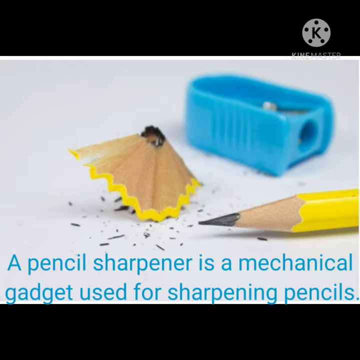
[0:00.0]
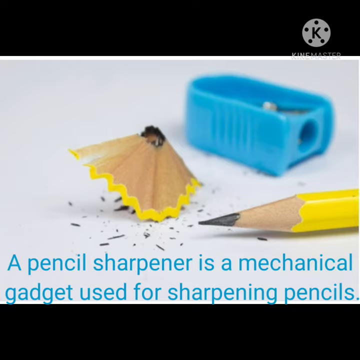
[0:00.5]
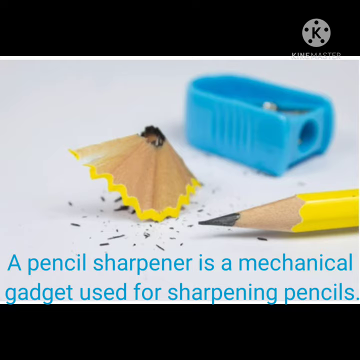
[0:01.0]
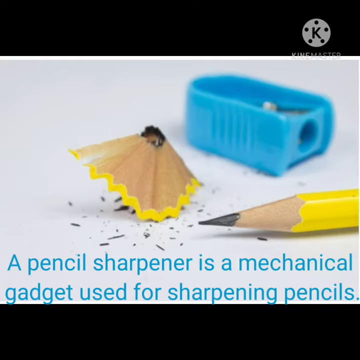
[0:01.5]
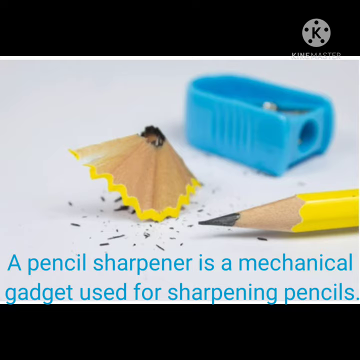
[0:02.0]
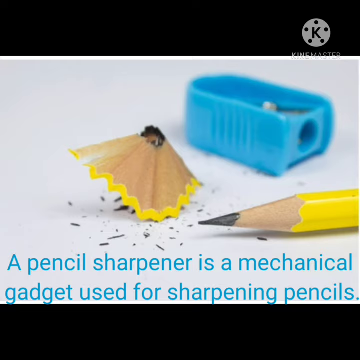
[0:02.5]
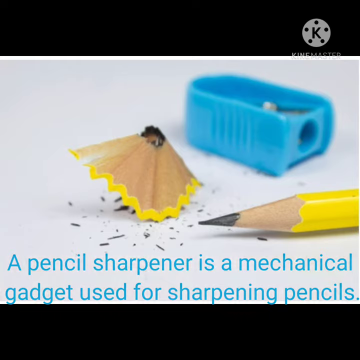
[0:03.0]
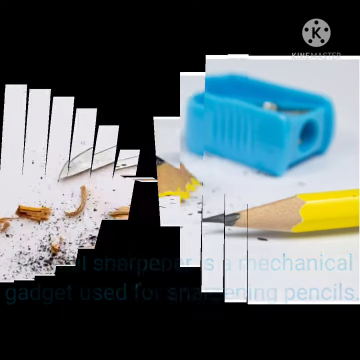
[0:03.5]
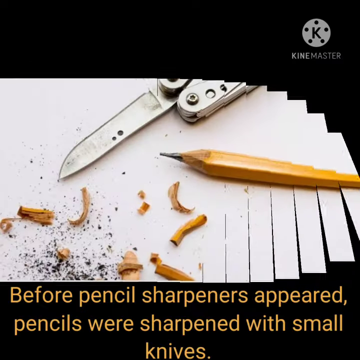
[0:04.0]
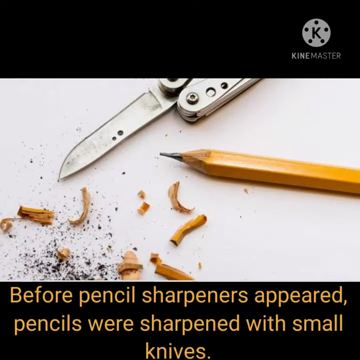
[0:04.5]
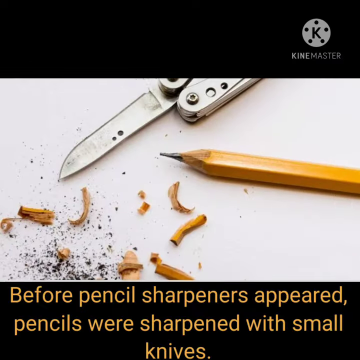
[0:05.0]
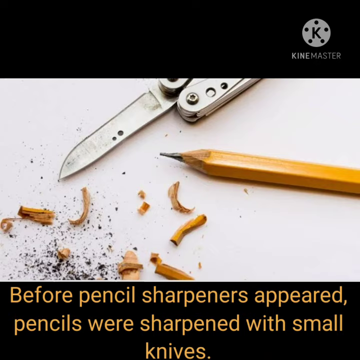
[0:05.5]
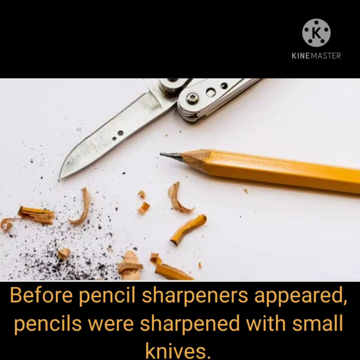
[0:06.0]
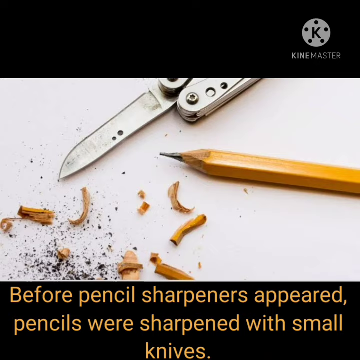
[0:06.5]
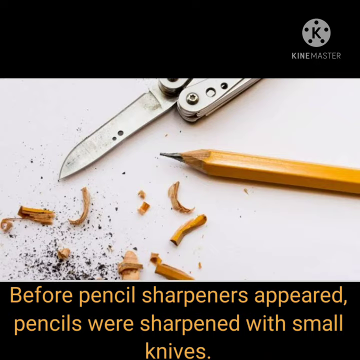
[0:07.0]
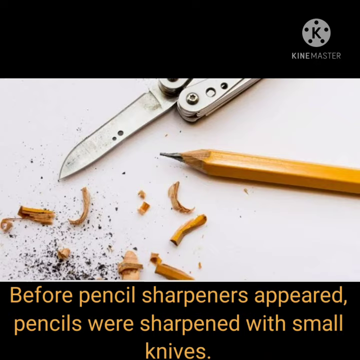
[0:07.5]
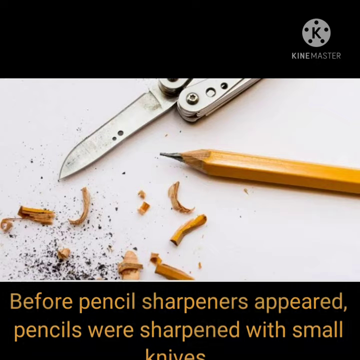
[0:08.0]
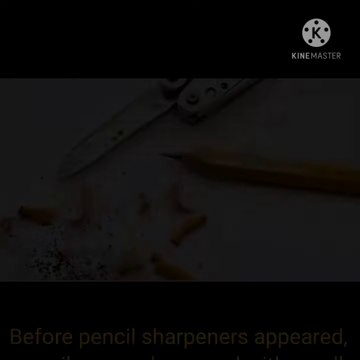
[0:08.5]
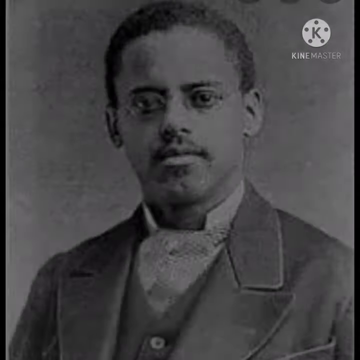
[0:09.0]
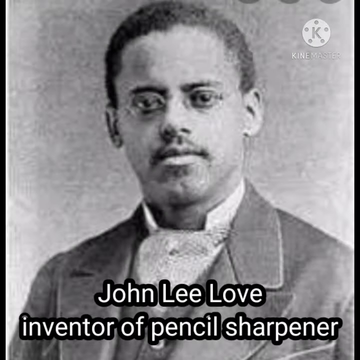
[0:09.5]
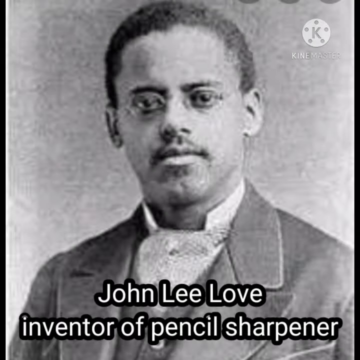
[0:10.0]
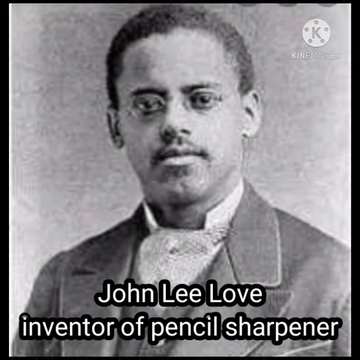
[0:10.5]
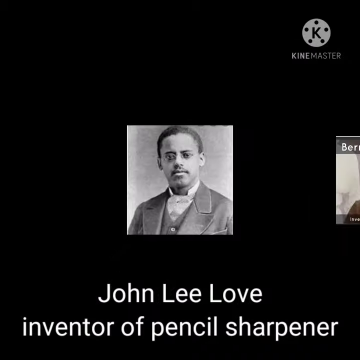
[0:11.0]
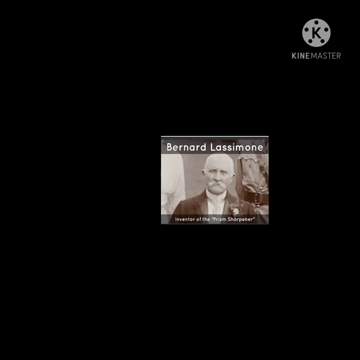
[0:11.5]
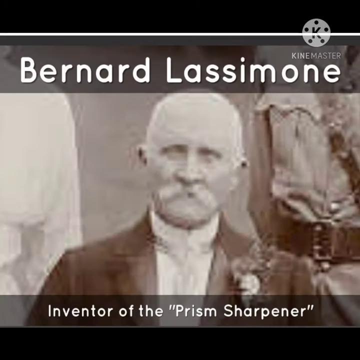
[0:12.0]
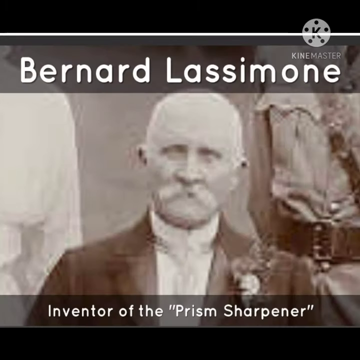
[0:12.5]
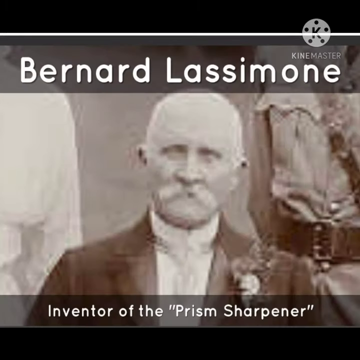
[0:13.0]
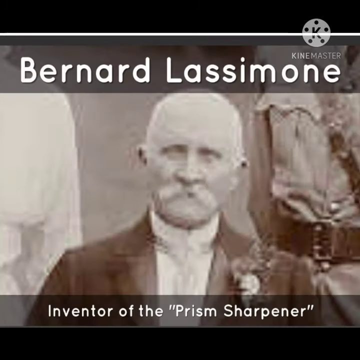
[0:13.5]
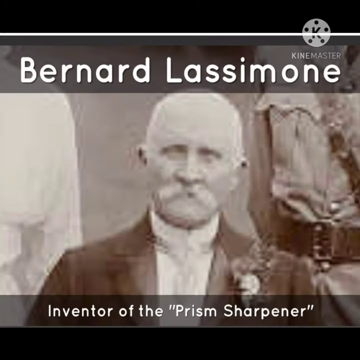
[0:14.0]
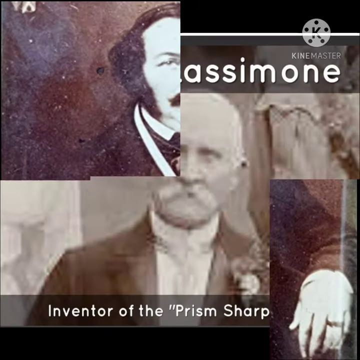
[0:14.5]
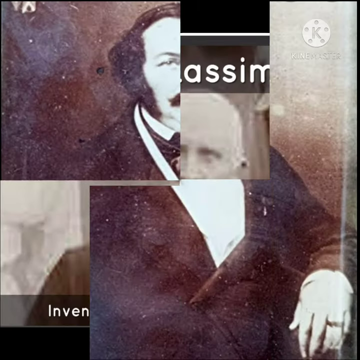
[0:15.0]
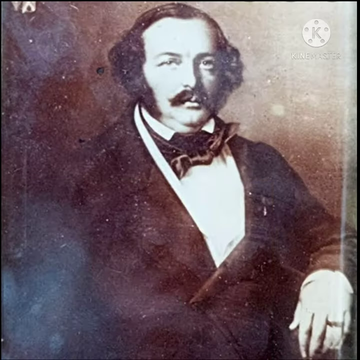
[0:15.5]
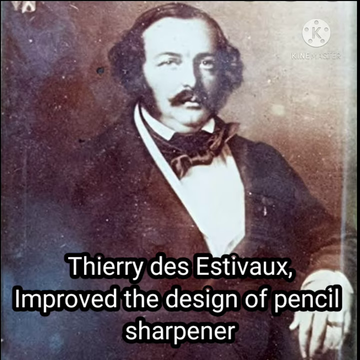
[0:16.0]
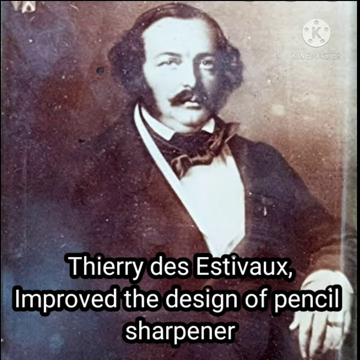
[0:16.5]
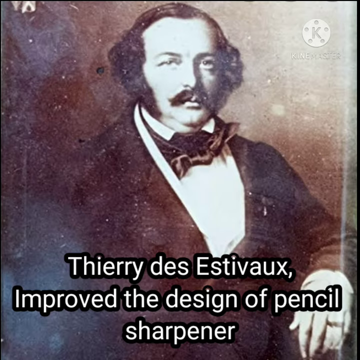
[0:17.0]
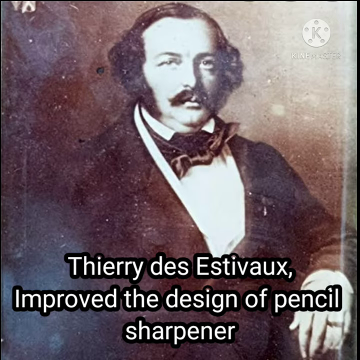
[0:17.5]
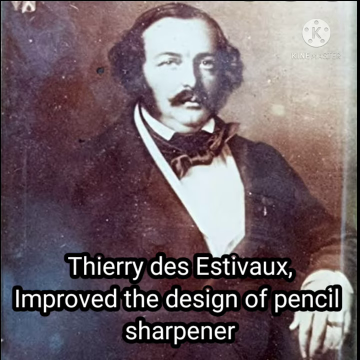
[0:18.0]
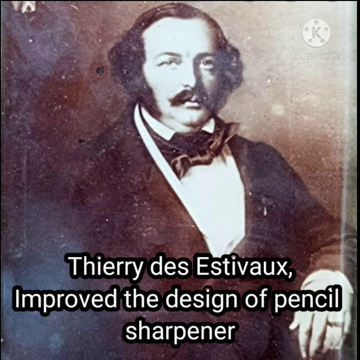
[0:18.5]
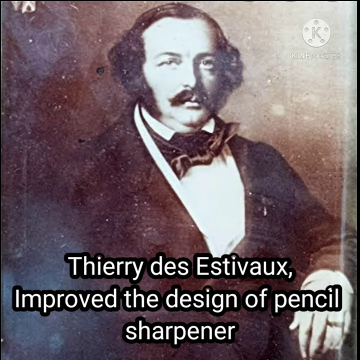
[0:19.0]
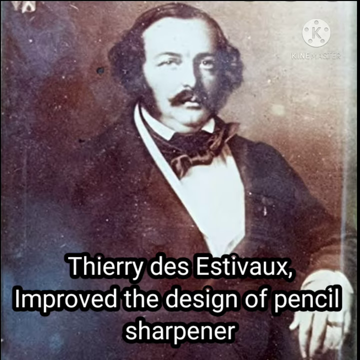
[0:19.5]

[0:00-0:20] The video is zoomed in on a yellow pencil and a couple of different devices: a shiny silver knife and a blue pencil sharpener. It then switches to a series of black and white photos of various men, some with big beards and some with mustaches. The photos look like they are from a different century, apparently the 19th century.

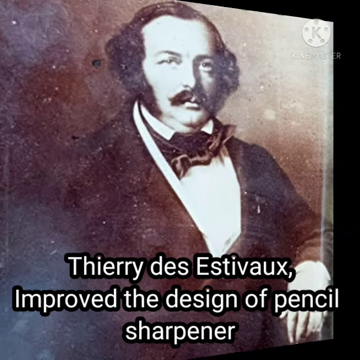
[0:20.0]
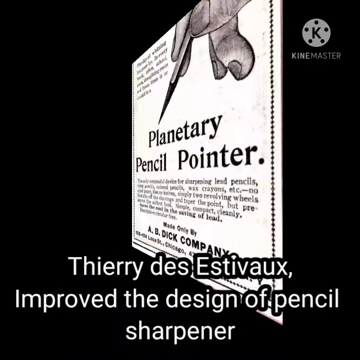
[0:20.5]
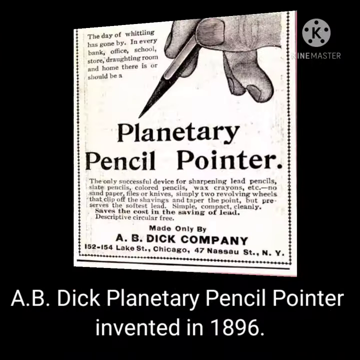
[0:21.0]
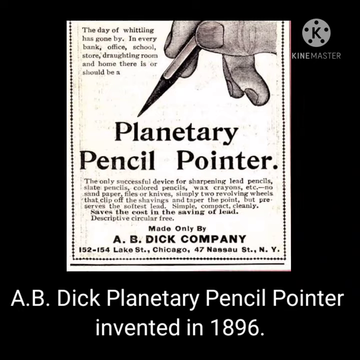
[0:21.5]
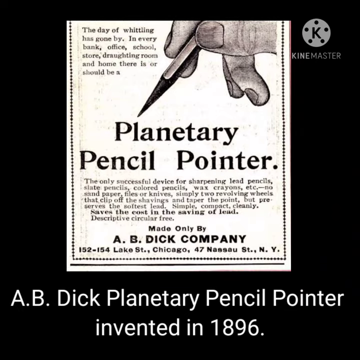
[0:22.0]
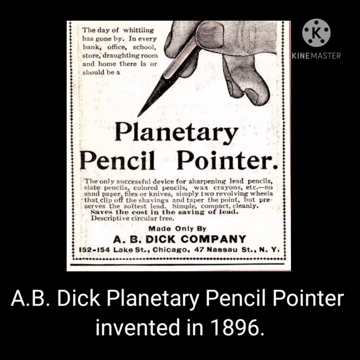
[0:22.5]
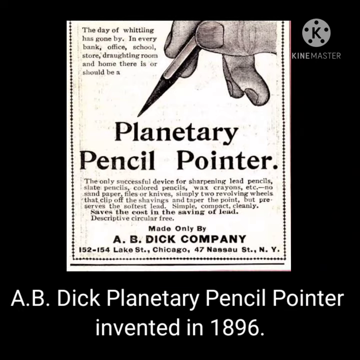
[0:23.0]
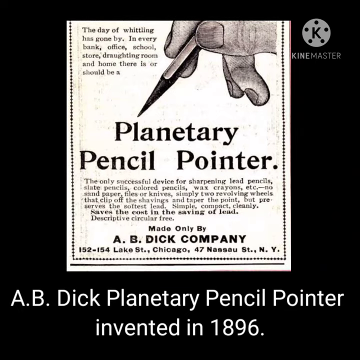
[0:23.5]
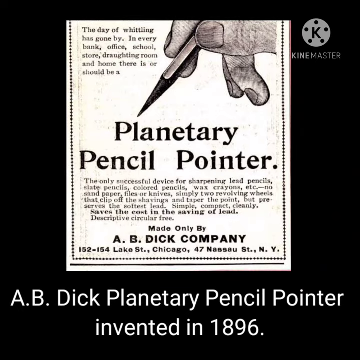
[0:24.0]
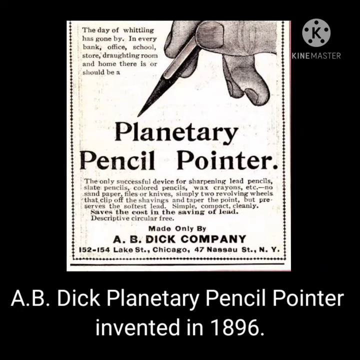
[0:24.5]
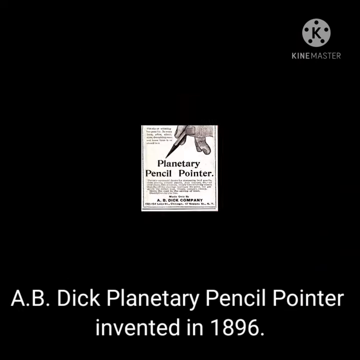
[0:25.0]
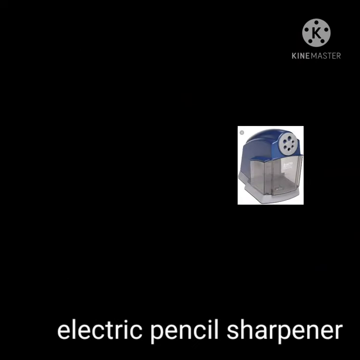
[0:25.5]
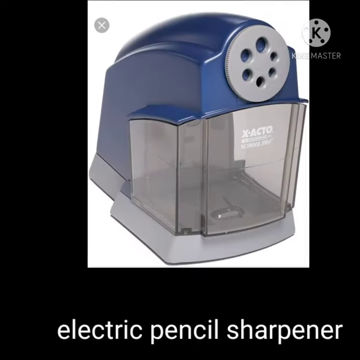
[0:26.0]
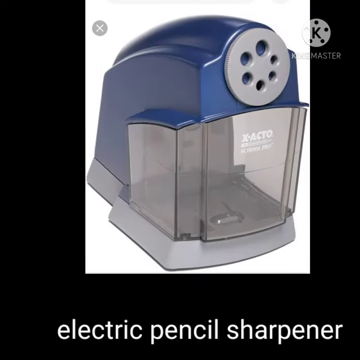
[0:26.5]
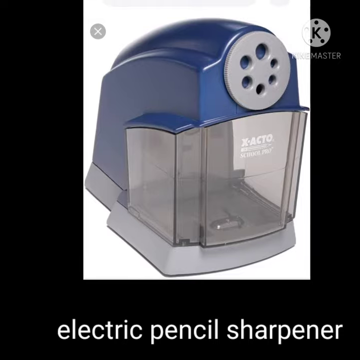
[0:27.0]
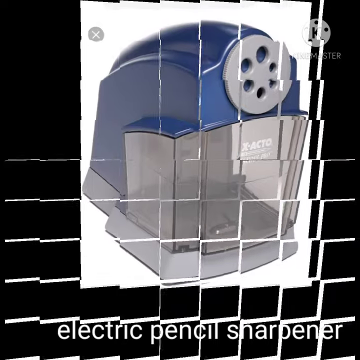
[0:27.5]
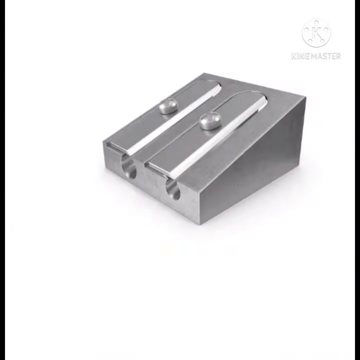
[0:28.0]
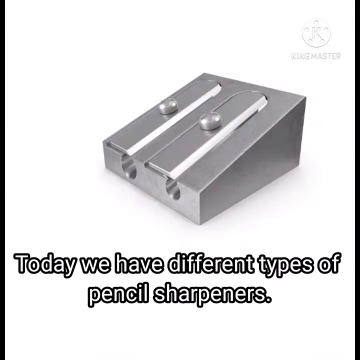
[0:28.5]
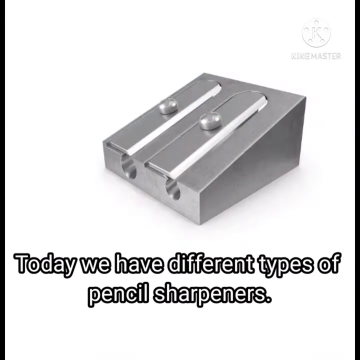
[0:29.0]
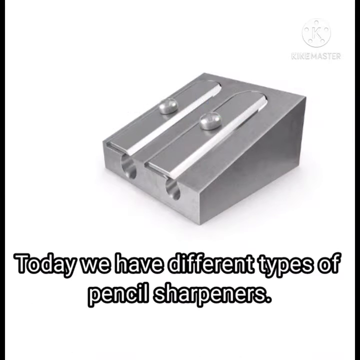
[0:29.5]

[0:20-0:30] Black and white images are shown. The first is of a portly gentleman with a large mustache, apparently a man named Terry Day Esteveau, who looks like he may be from the 19th century. He wears a very nice suit with a bow tie that looks silk. The video then switches to a black and white advertisement about a pencil, probably from the 20th century. Next come modern day photos of modern day pencil sharpeners, shown back to back: a blue, clear plastic electric pencil sharpener and a manual, small, square silver pencil sharpener.